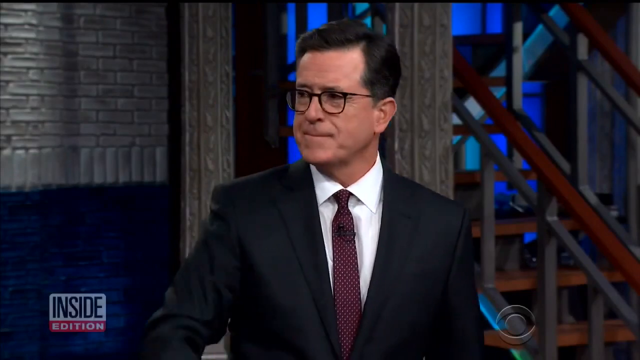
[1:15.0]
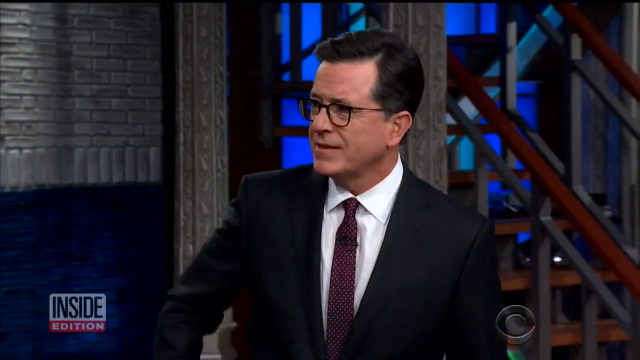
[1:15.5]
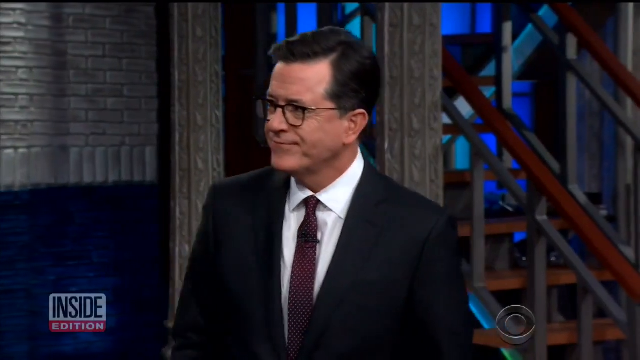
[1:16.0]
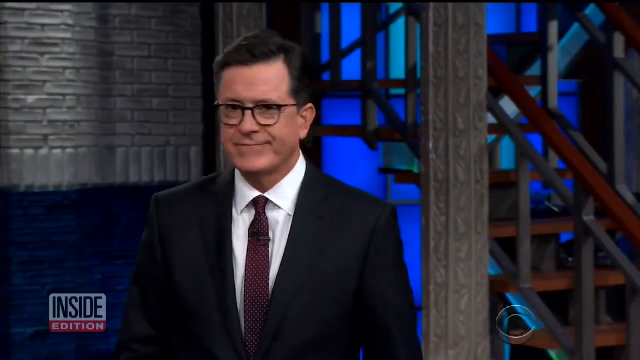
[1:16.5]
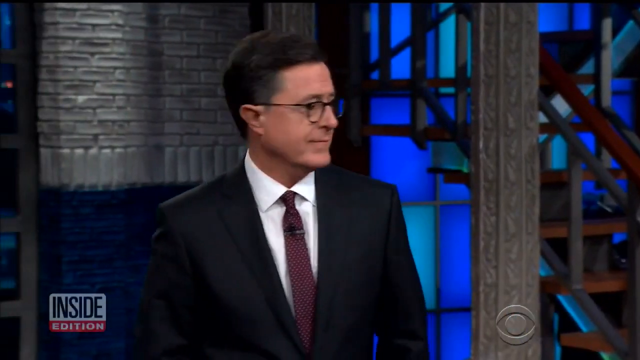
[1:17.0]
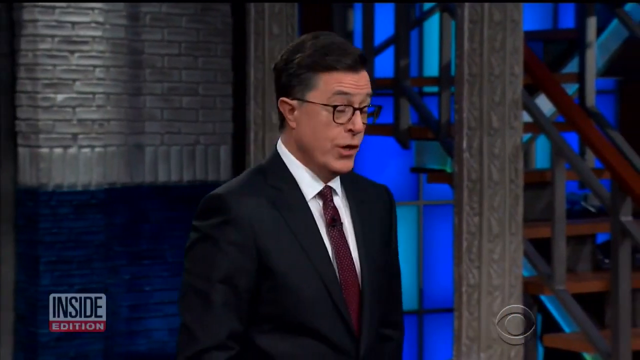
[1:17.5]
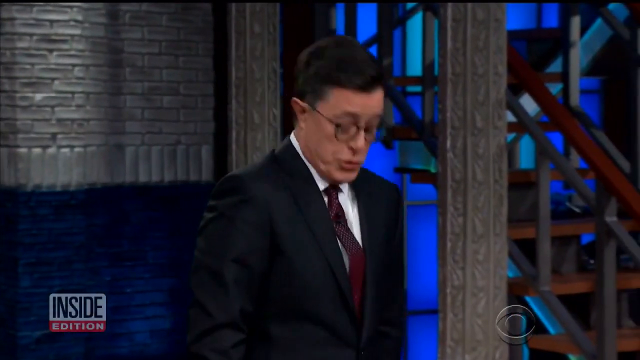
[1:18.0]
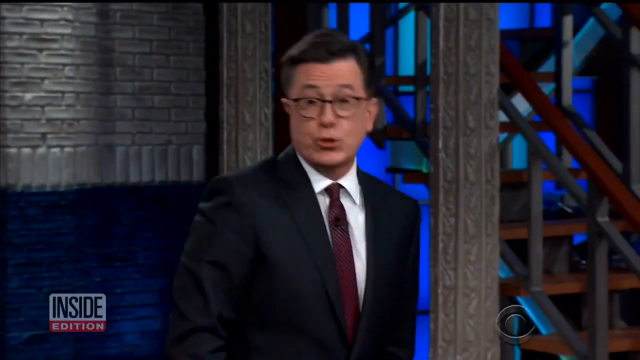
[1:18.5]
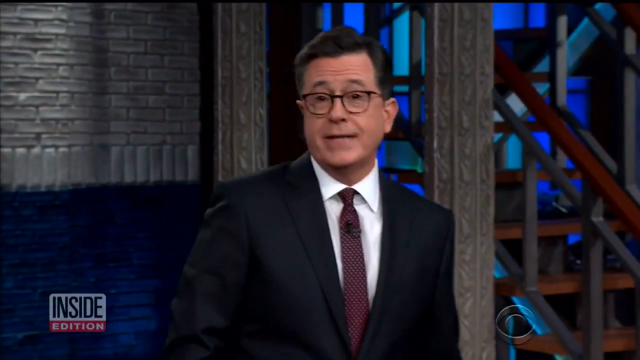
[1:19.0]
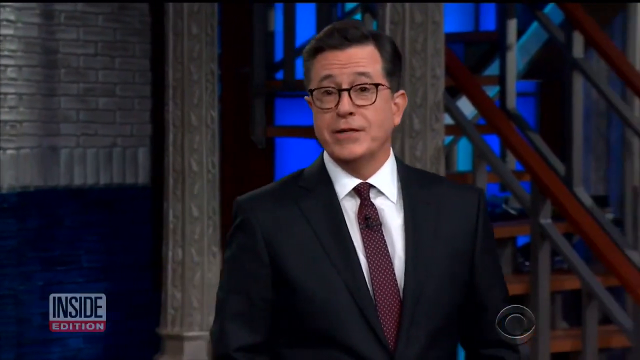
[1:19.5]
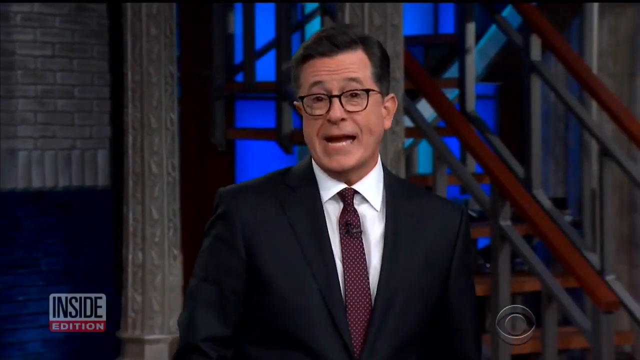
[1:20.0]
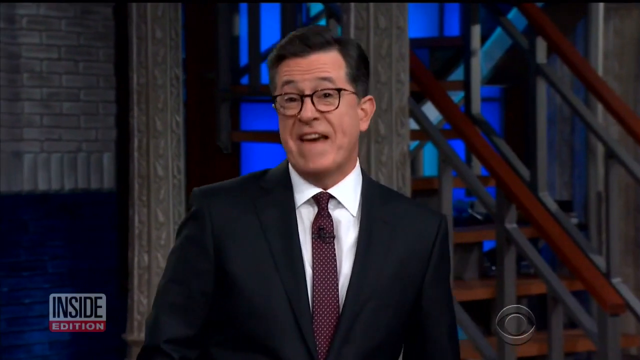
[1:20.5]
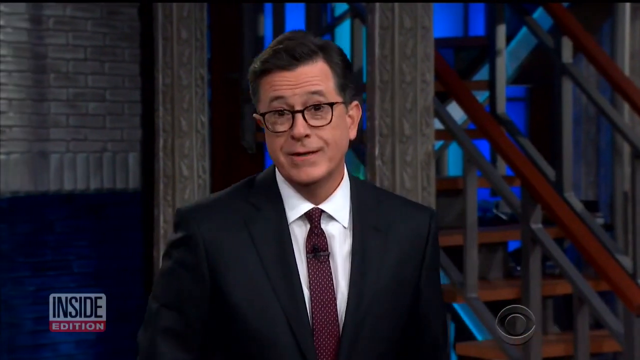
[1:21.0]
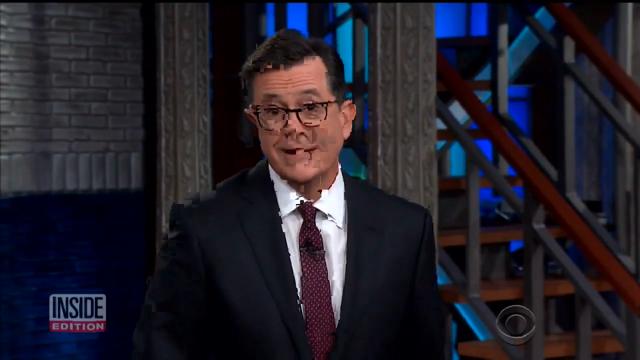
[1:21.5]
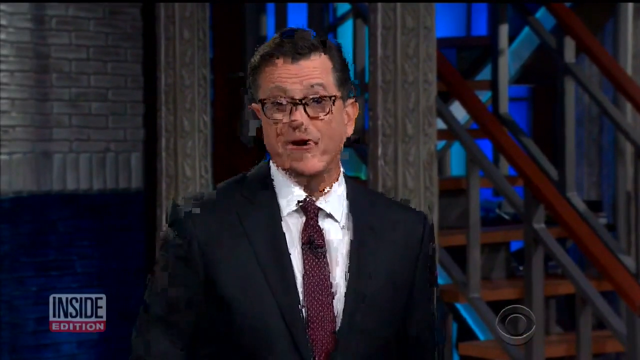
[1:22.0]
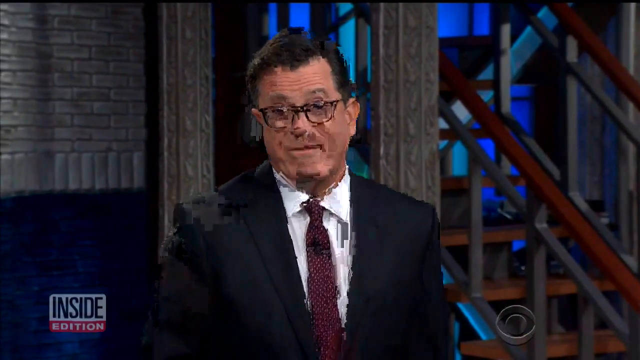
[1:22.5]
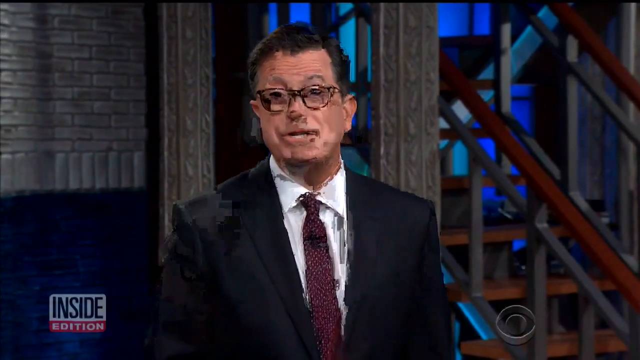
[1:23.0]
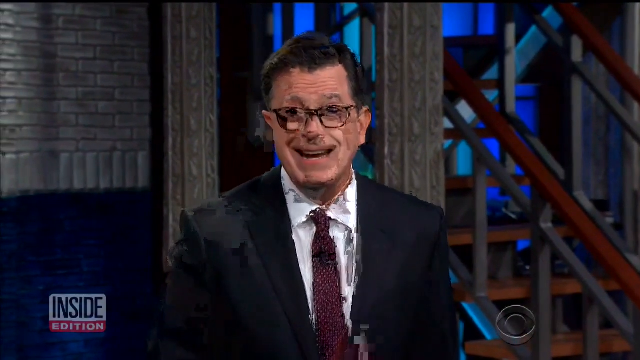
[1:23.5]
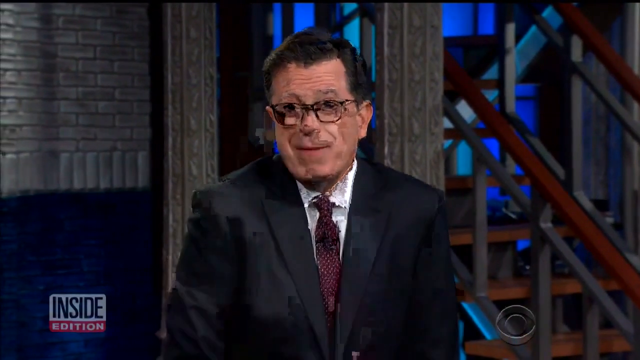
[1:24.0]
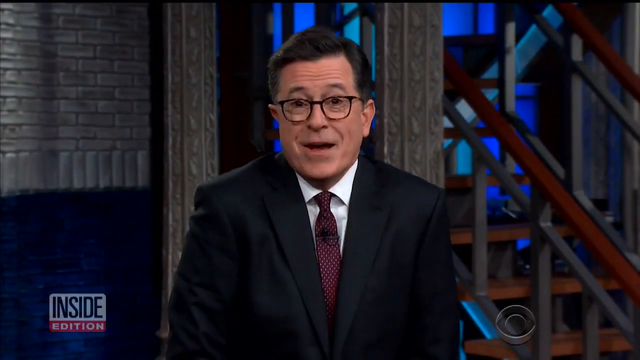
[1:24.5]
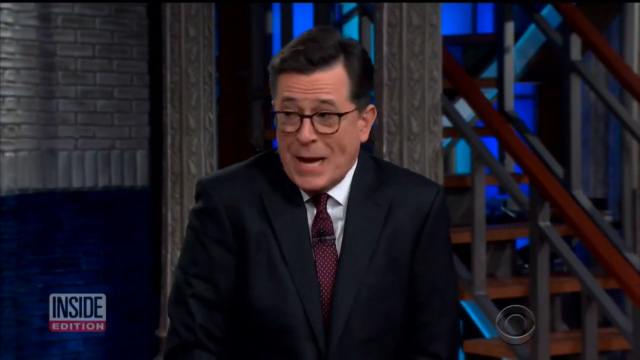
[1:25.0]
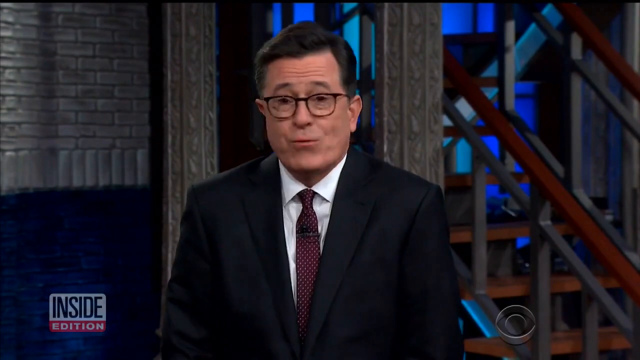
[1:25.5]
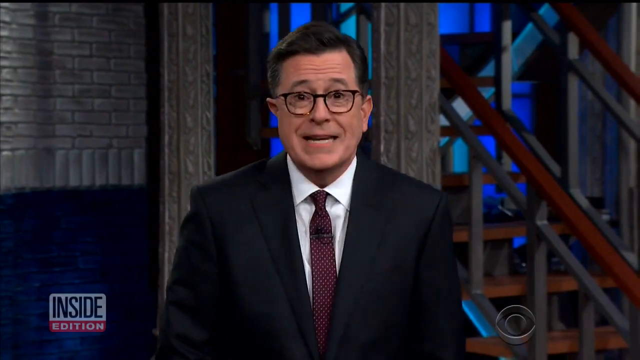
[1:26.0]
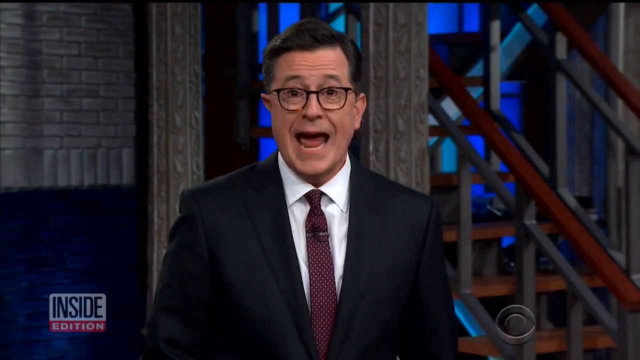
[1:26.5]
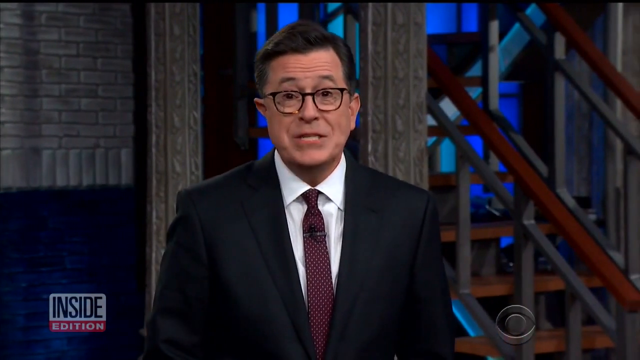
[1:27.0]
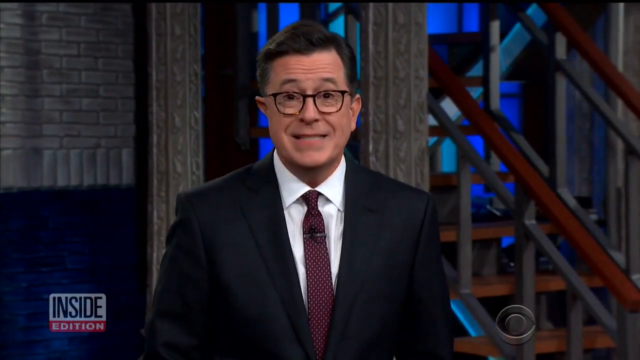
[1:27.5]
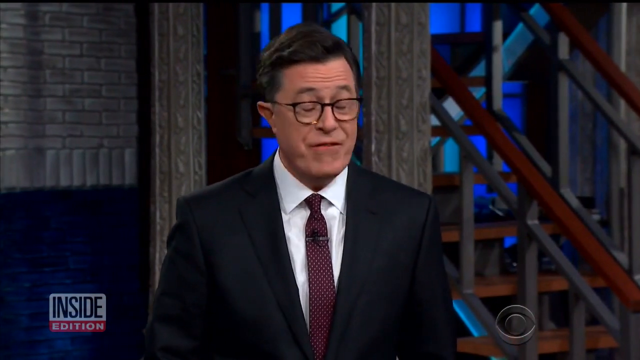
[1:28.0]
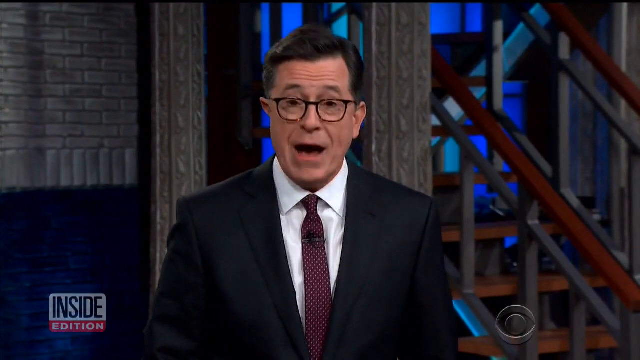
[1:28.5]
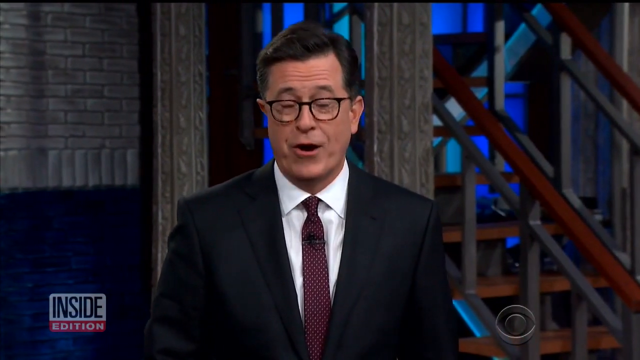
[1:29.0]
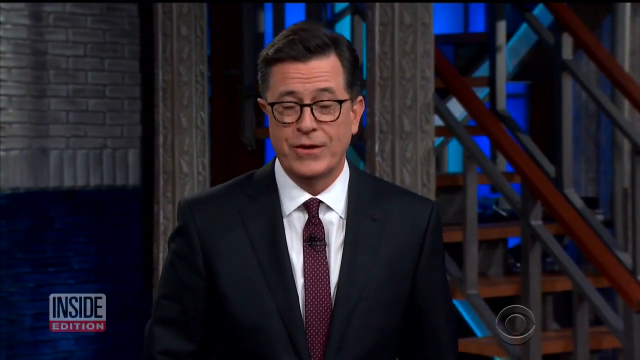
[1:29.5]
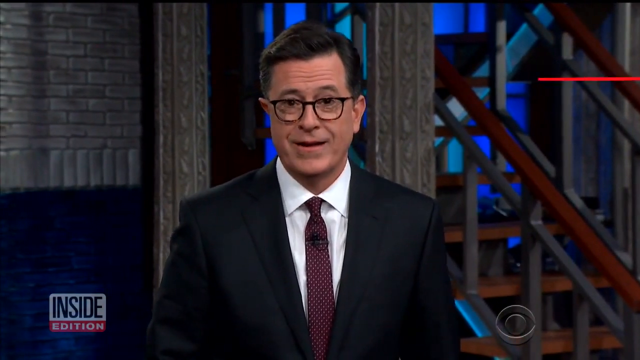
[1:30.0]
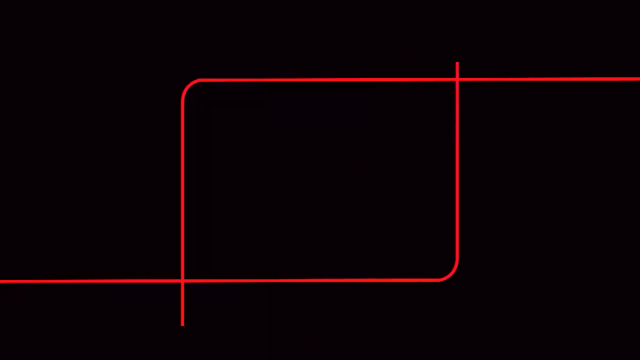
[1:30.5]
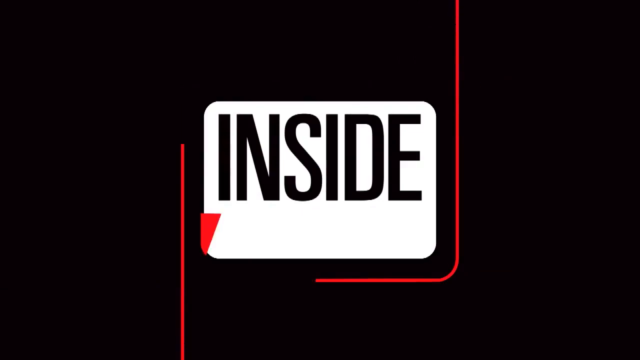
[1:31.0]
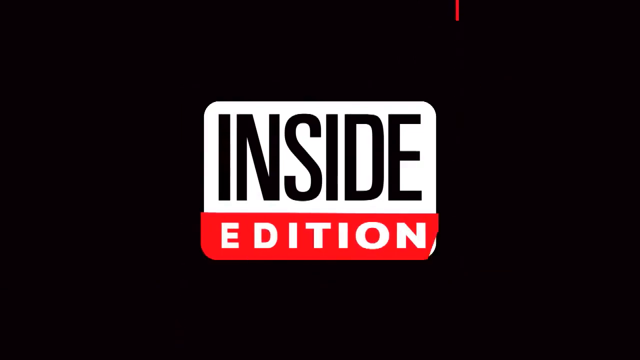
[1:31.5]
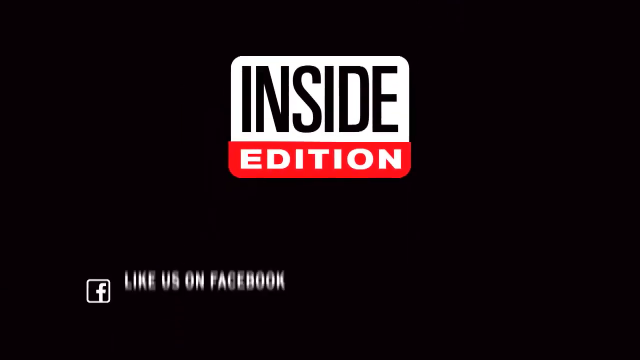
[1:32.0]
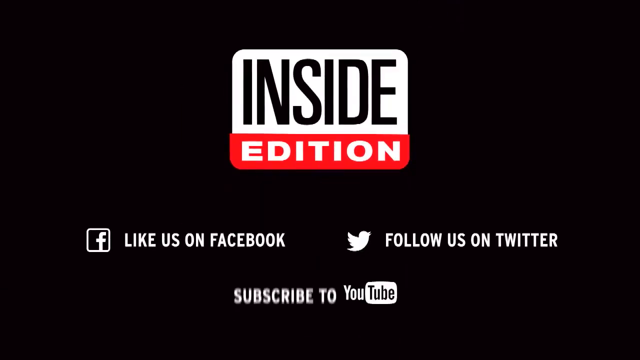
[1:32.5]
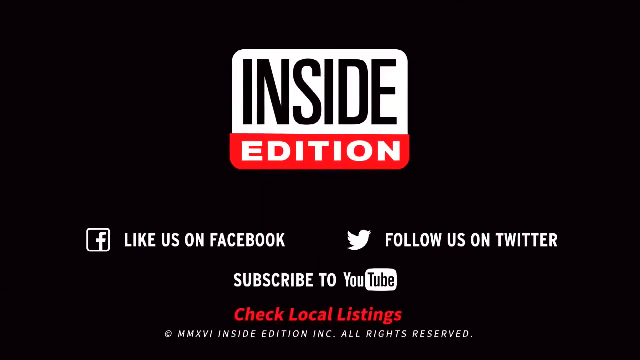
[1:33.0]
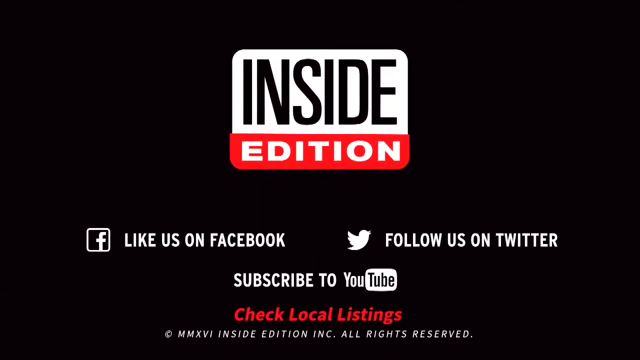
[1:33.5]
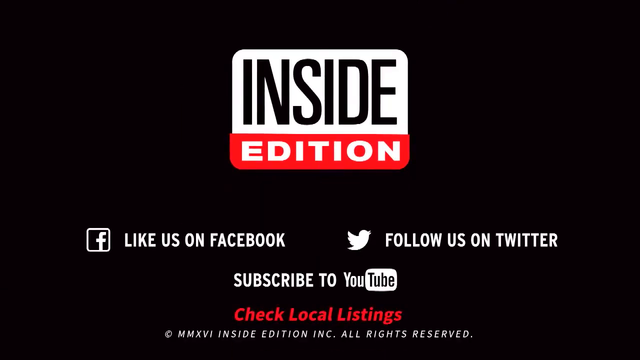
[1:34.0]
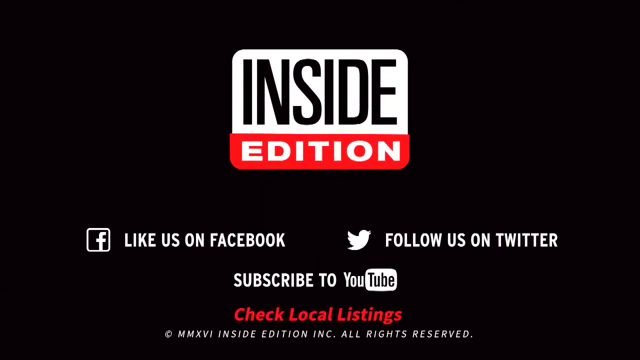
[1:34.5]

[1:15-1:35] Stephen Colbert continues speaking to the audience at his show. He wears a navy blue suit, a white collared shirt and a maroon tie, along with black glasses, and has short black hair. He shakes his head back and forth in a seeming show of disbelief and occasionally lifts his shoulders in a sort of shrug. He seems fairly animated in the way he moves around while speaking to the audience. The Inside Edition logo remains in the lower left corner of the video. At the end, the video shows just the Inside Edition logo.